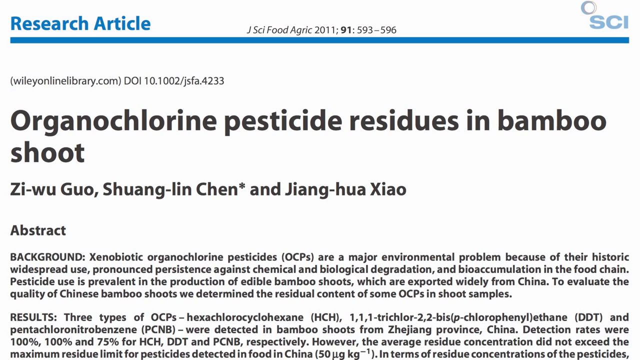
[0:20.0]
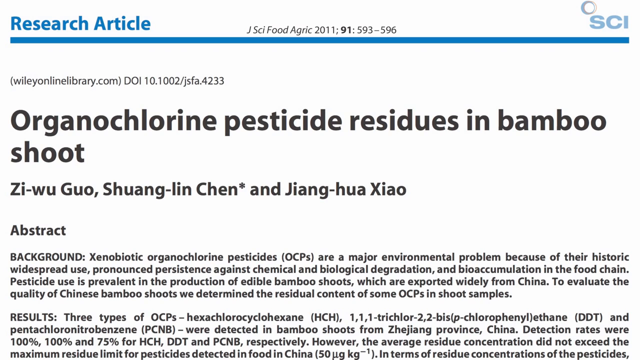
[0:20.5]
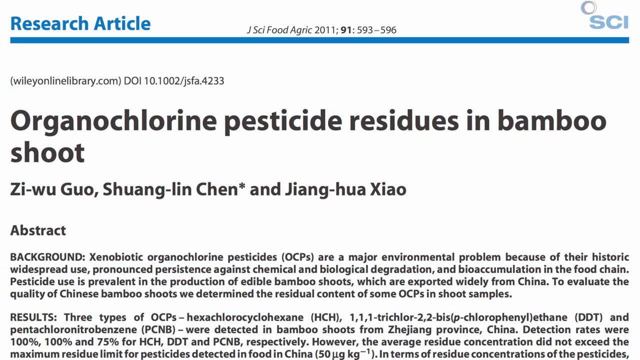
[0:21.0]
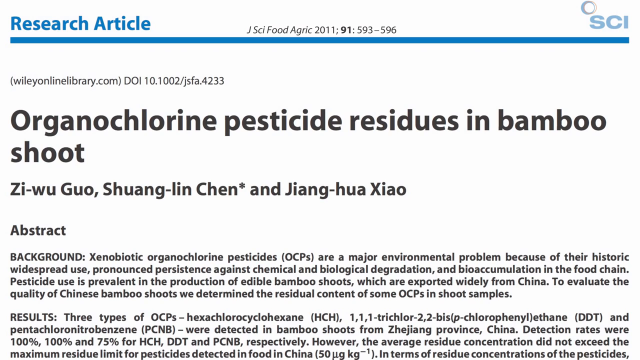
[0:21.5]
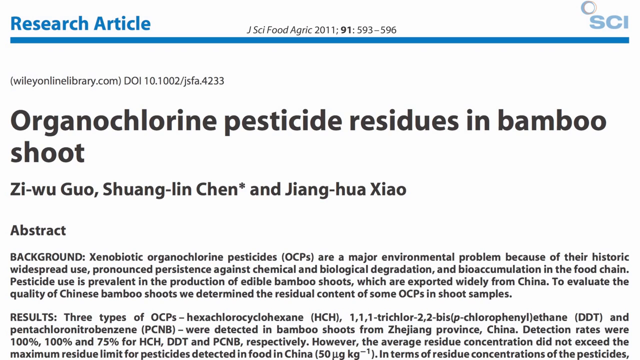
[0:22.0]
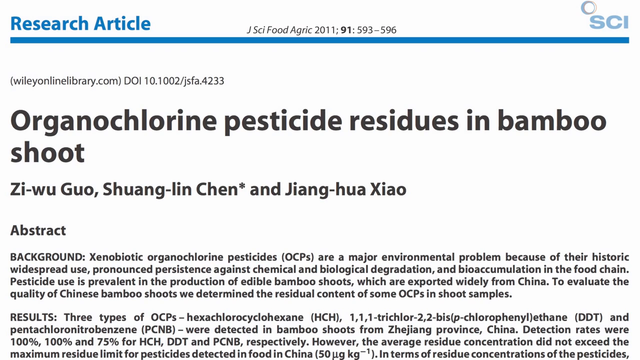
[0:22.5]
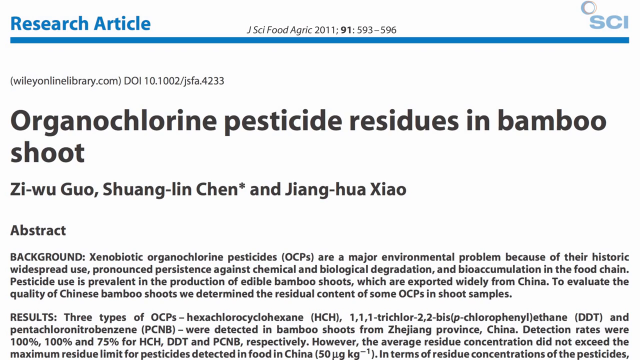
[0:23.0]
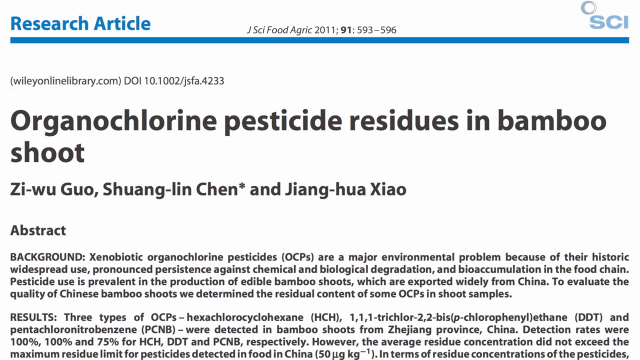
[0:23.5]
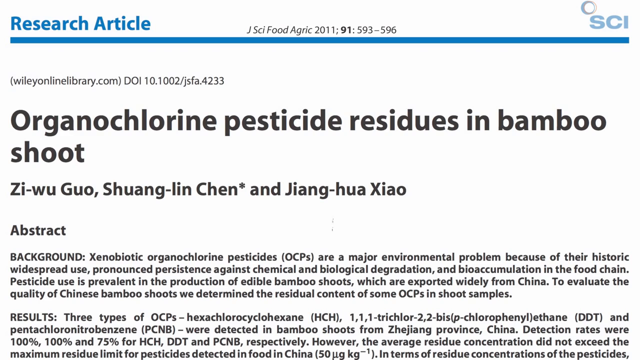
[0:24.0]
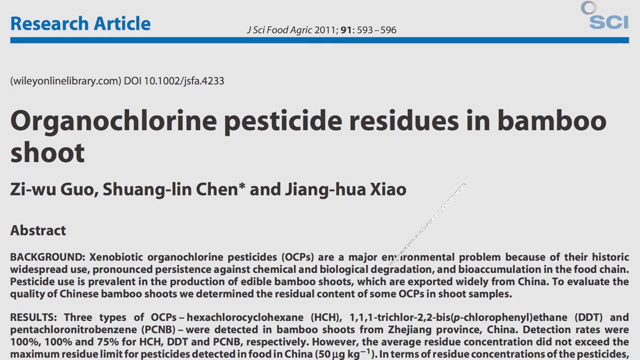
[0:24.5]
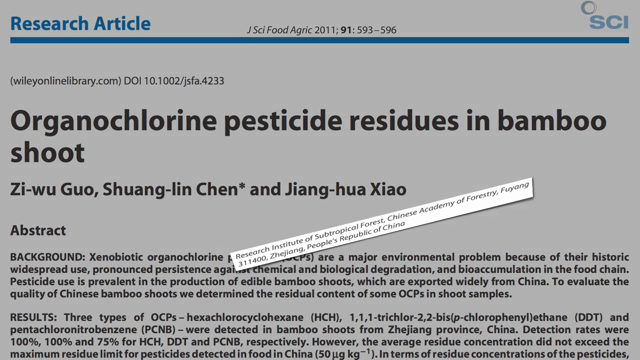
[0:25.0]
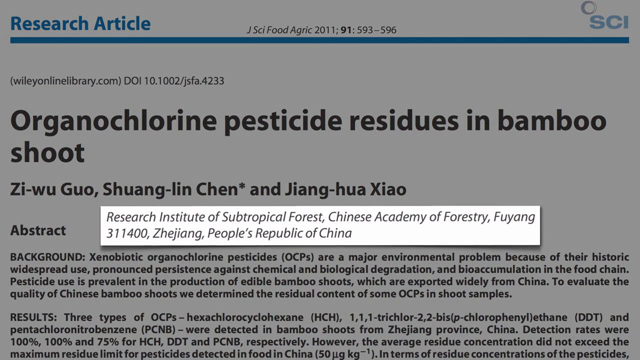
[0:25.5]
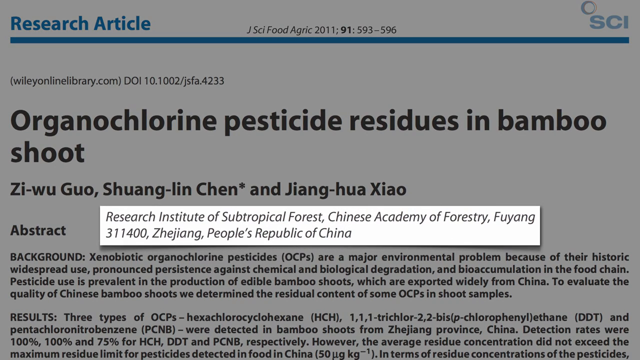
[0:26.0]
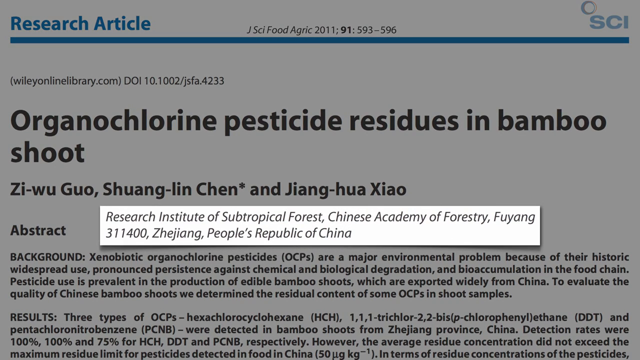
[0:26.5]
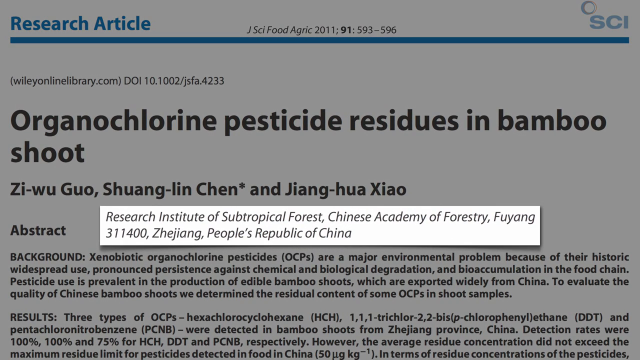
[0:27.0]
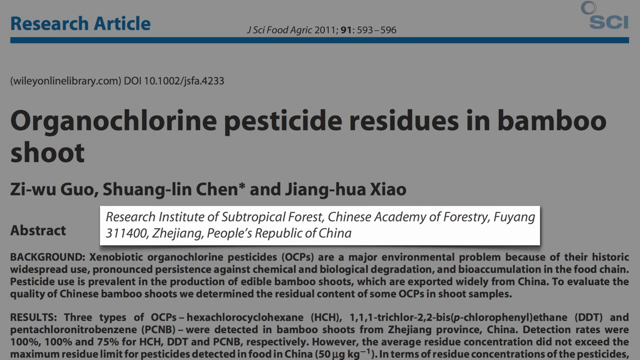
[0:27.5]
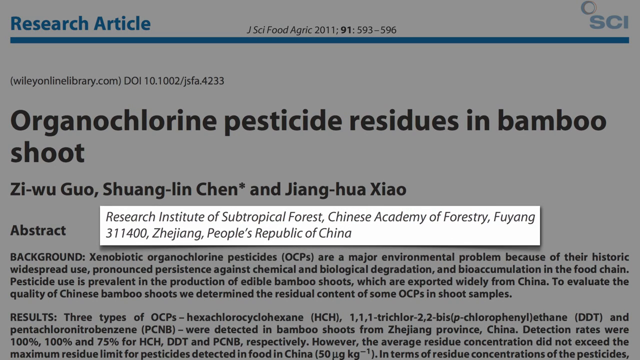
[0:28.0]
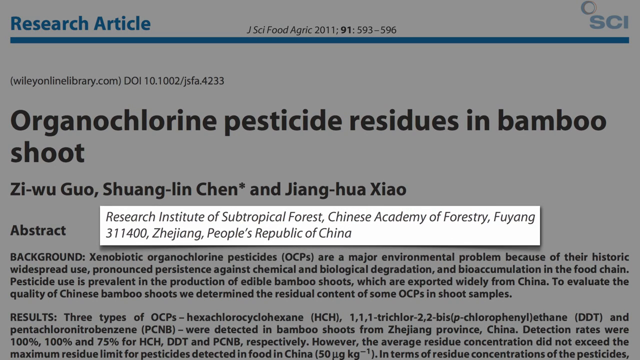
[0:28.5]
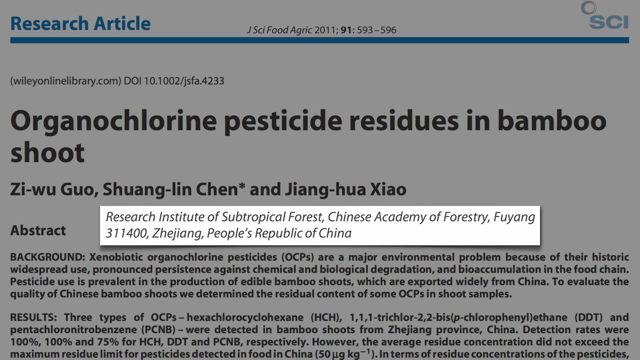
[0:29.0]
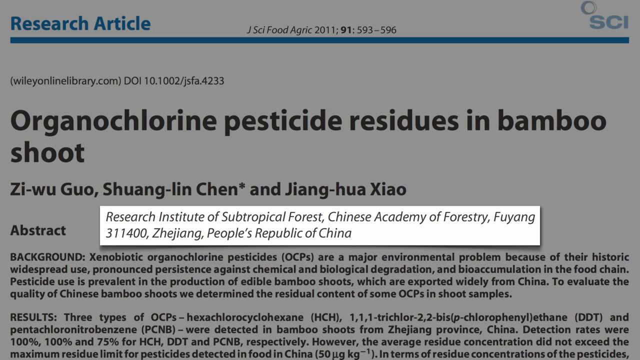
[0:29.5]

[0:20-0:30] The top of a research article is shown. "Research article" is printed in blue font on the top left-hand side, followed by a bold line across, with a logo saying "SAI" in the top right-hand corner. The journal information is in the centre above the line, and beneath it, left-justified, is the website address. A bold headline reads "organochlorine pesticide residues in bamboo shoot". The three authors are named, followed by an abstract. The article then fades into a paler grey background, and a white text box appears superimposed on it, reading "Research Institute of Subtropical Forest, Chinese Academy of Forestry, Fuyang" along with the organisation's address.